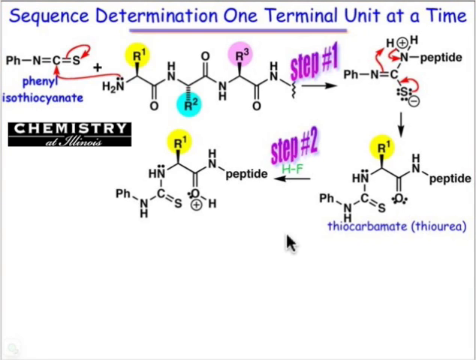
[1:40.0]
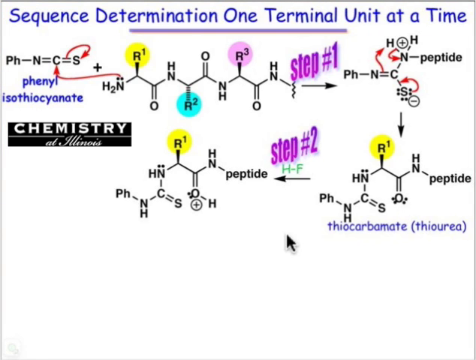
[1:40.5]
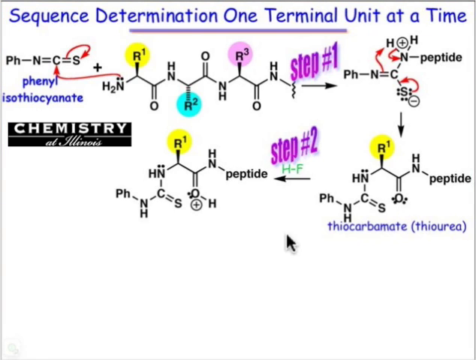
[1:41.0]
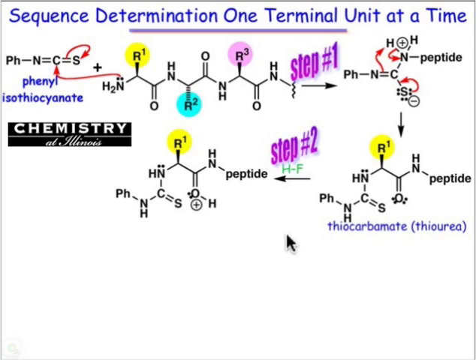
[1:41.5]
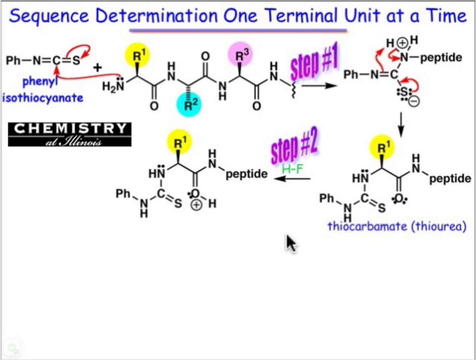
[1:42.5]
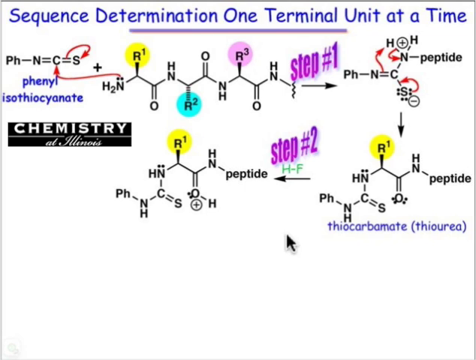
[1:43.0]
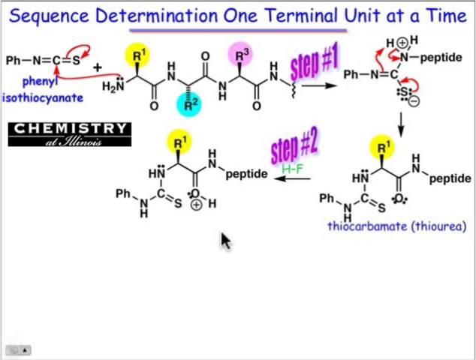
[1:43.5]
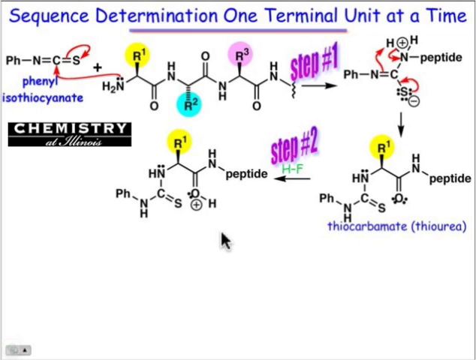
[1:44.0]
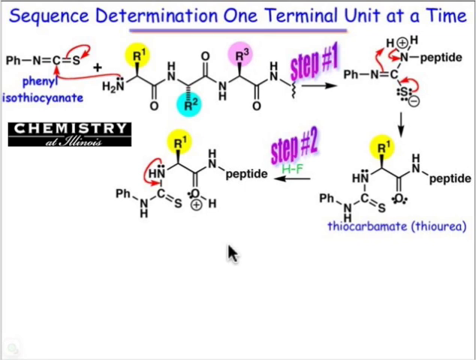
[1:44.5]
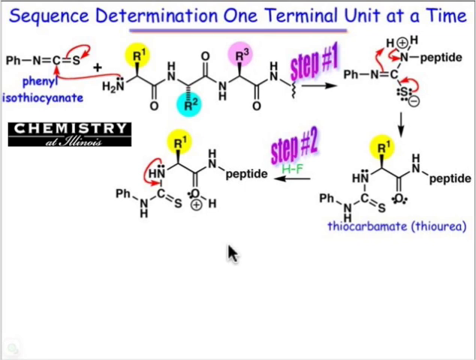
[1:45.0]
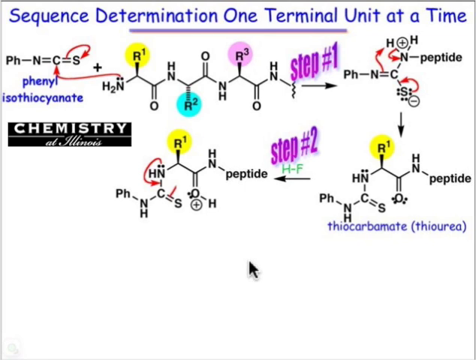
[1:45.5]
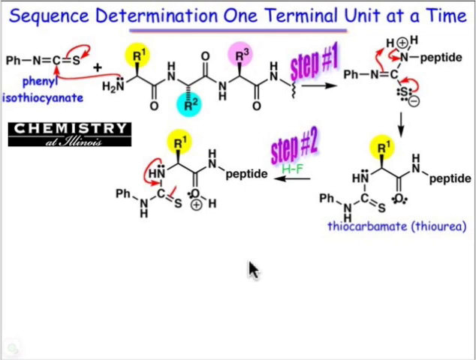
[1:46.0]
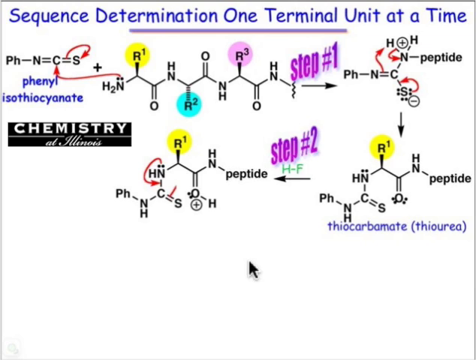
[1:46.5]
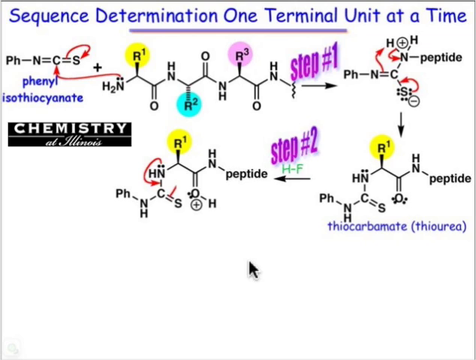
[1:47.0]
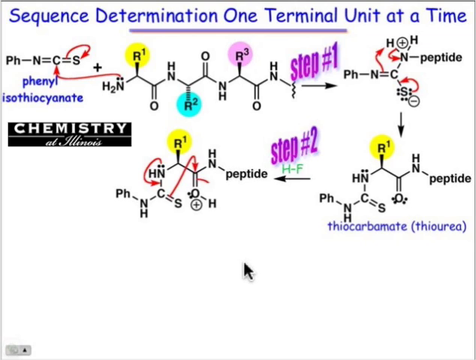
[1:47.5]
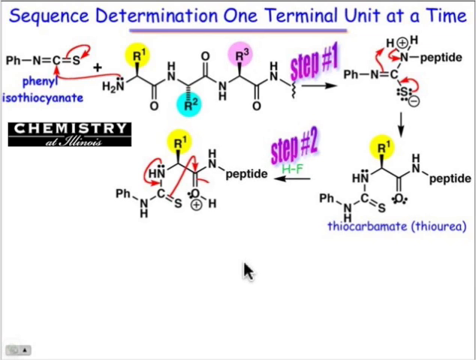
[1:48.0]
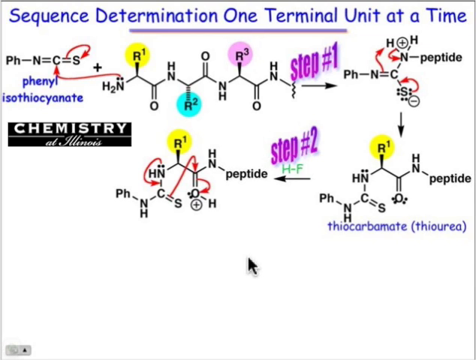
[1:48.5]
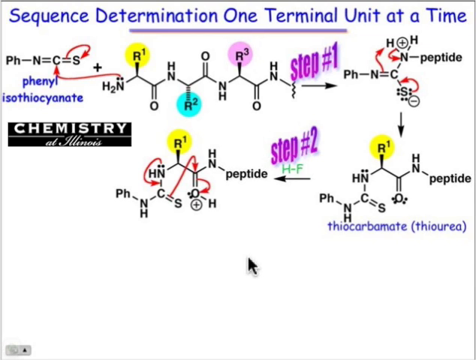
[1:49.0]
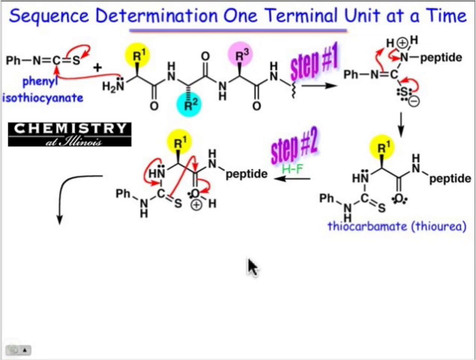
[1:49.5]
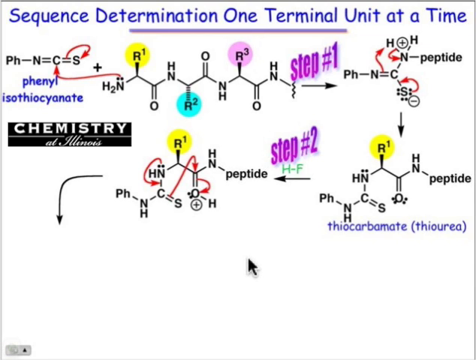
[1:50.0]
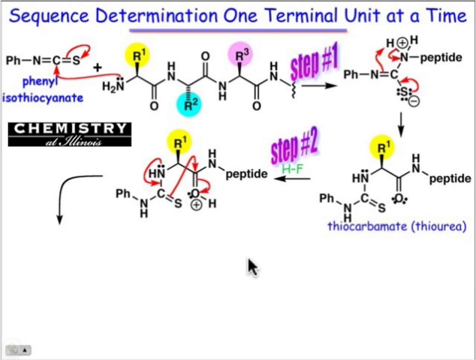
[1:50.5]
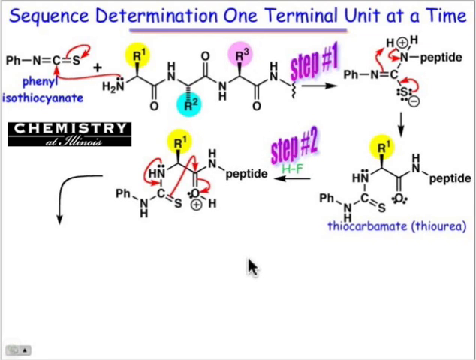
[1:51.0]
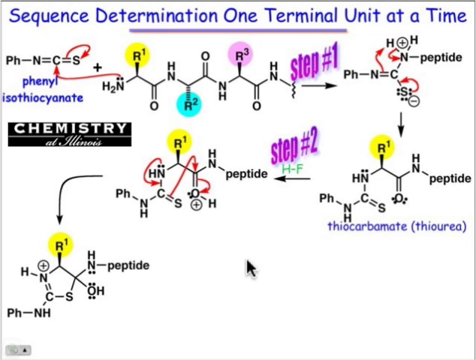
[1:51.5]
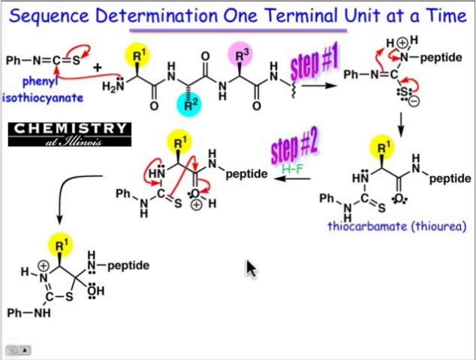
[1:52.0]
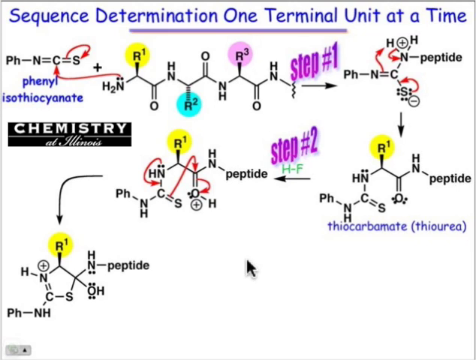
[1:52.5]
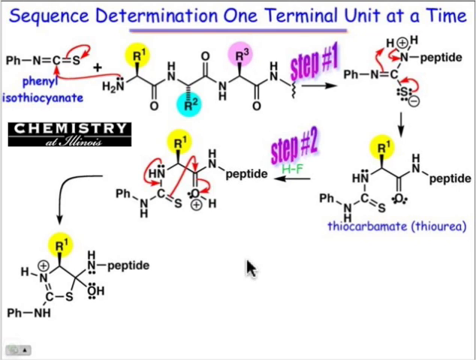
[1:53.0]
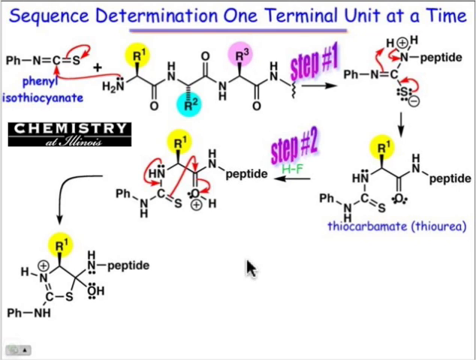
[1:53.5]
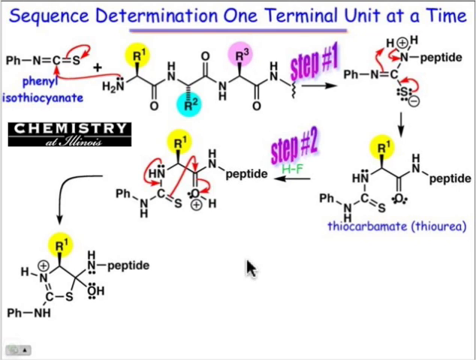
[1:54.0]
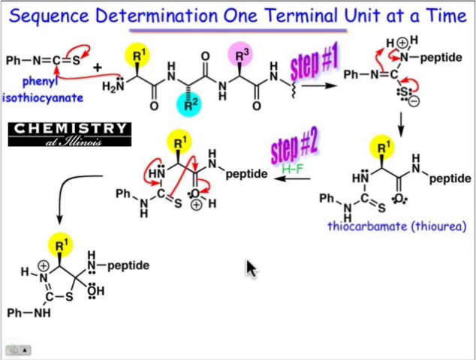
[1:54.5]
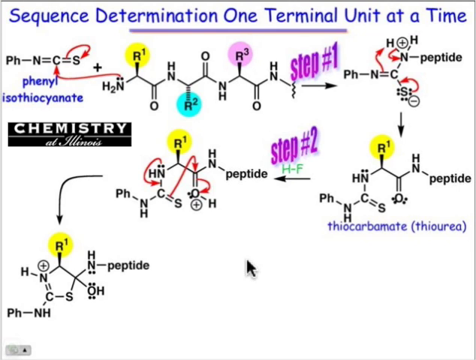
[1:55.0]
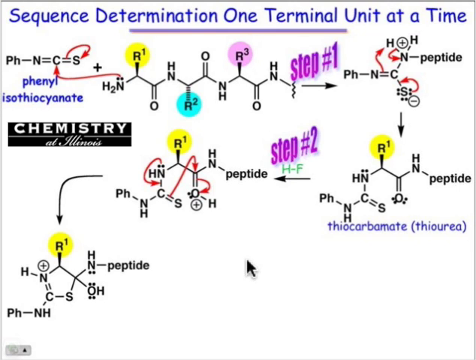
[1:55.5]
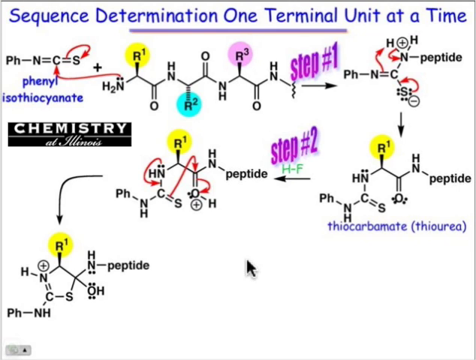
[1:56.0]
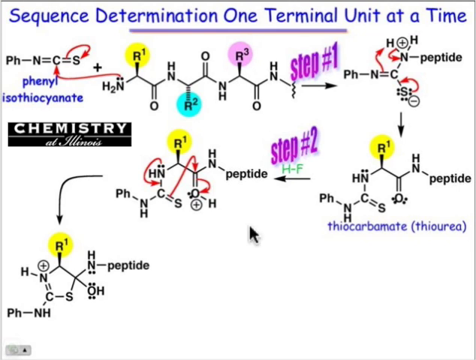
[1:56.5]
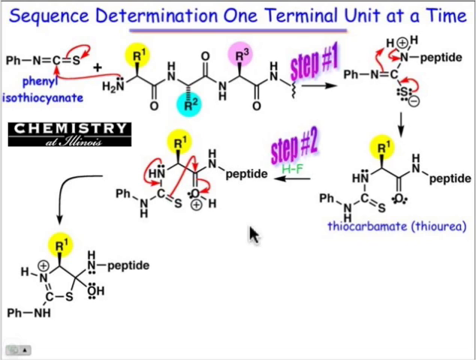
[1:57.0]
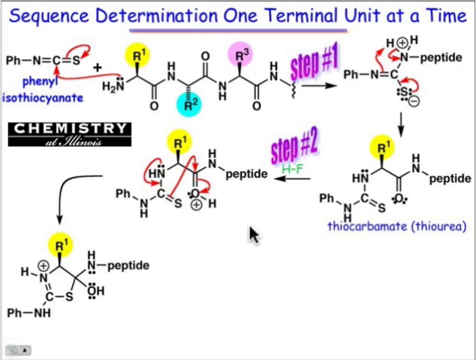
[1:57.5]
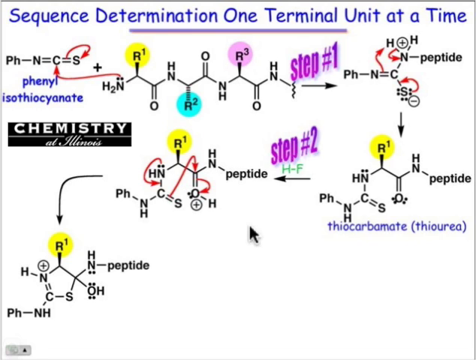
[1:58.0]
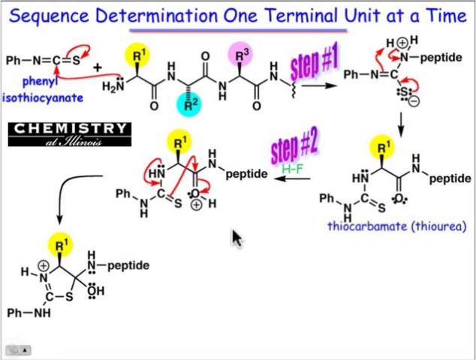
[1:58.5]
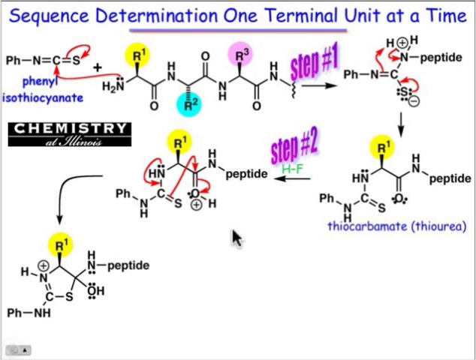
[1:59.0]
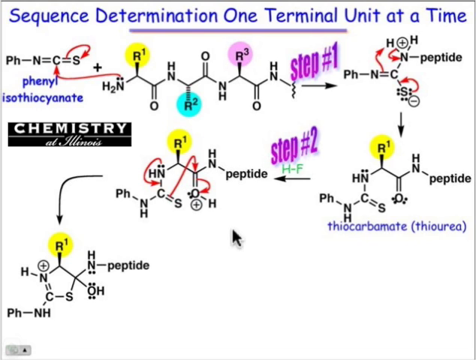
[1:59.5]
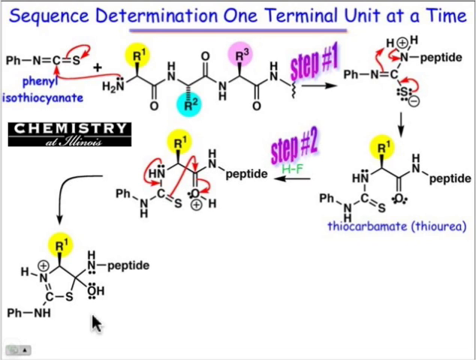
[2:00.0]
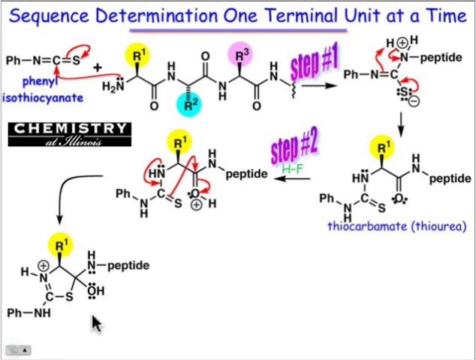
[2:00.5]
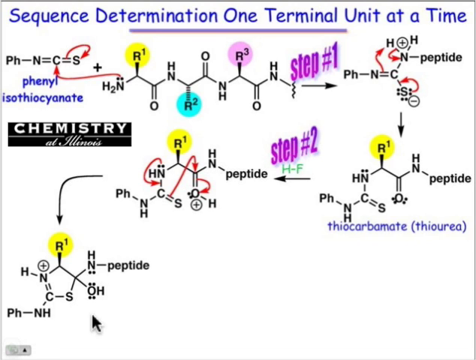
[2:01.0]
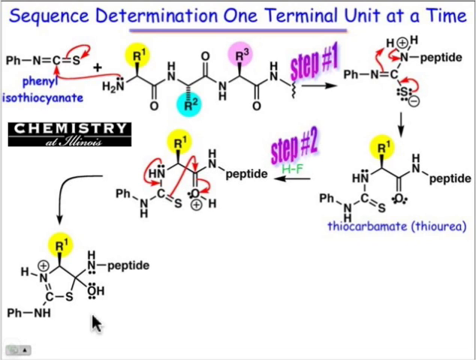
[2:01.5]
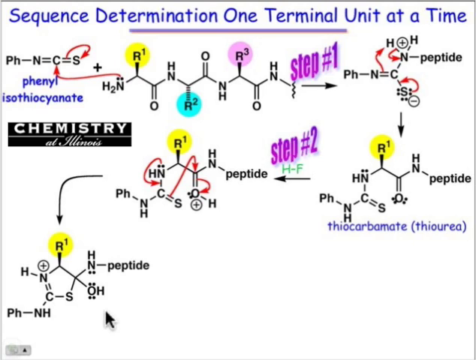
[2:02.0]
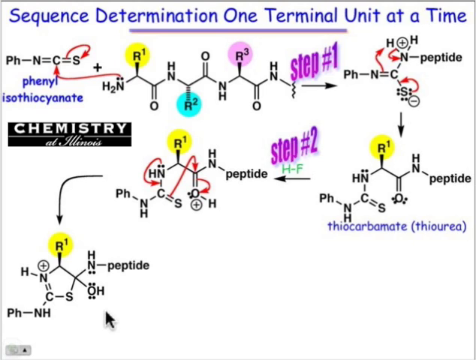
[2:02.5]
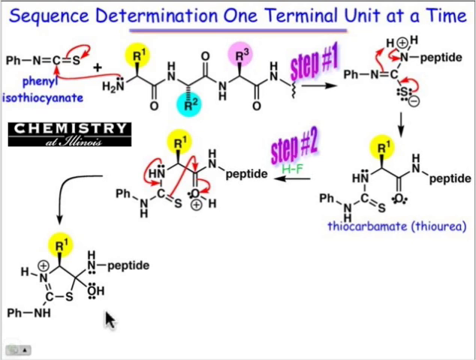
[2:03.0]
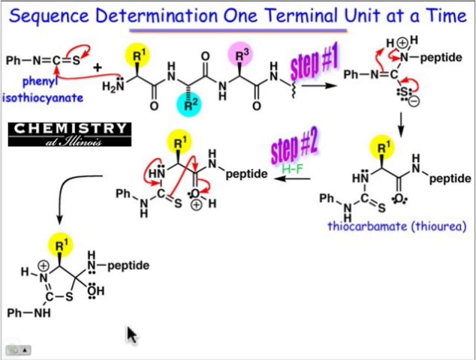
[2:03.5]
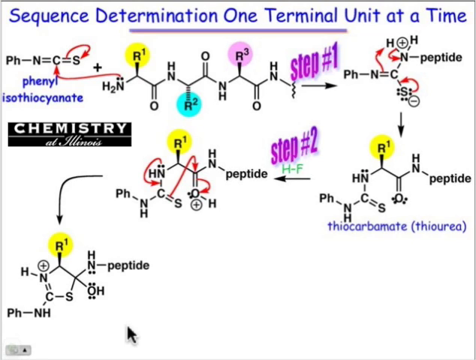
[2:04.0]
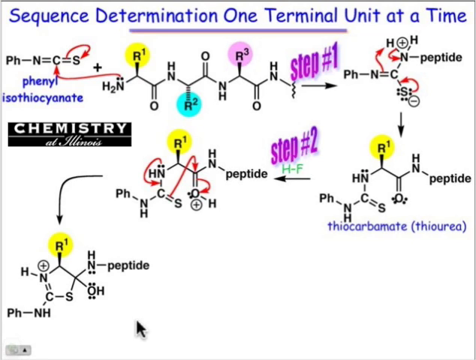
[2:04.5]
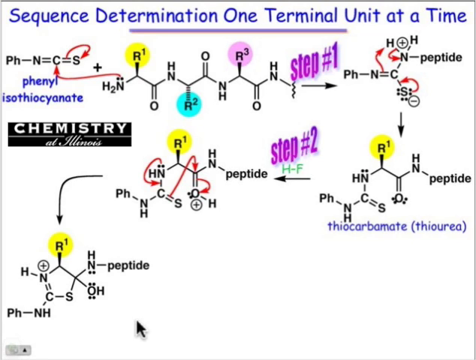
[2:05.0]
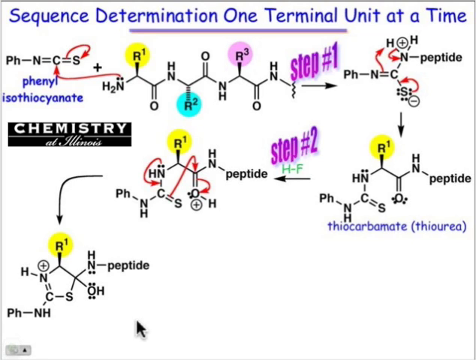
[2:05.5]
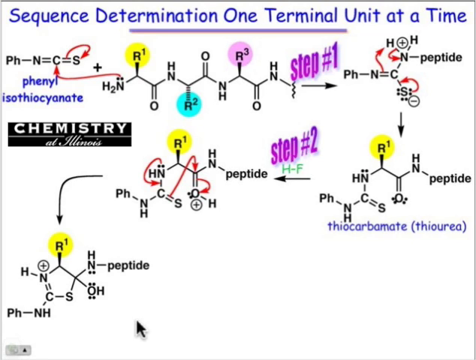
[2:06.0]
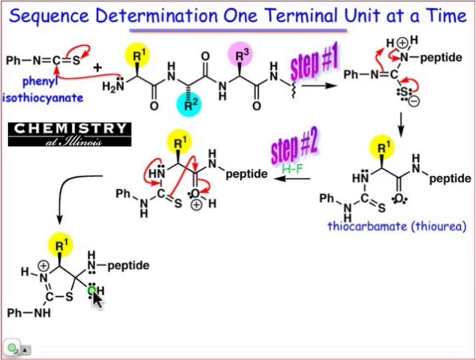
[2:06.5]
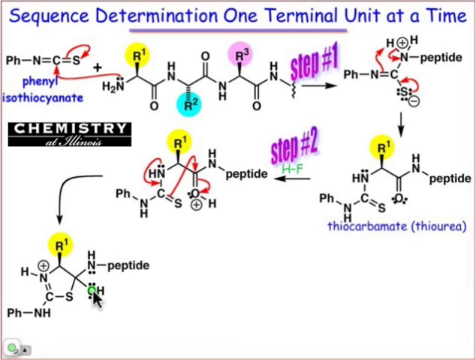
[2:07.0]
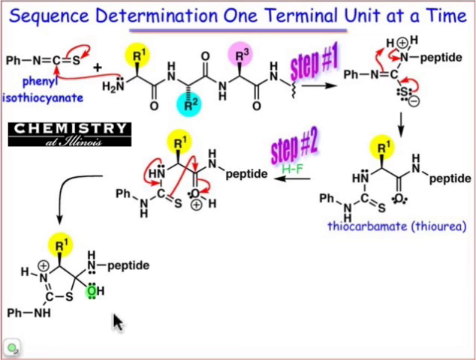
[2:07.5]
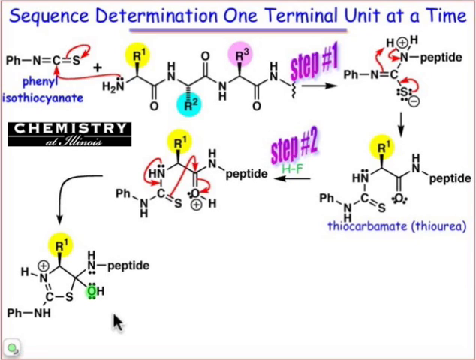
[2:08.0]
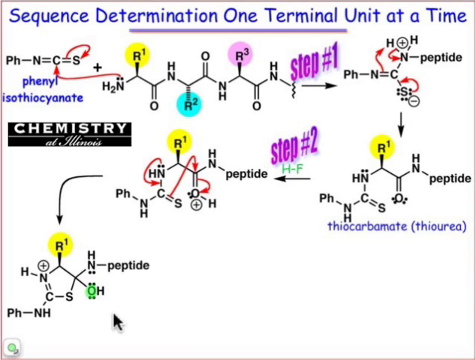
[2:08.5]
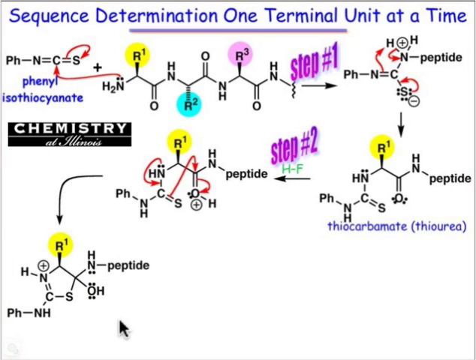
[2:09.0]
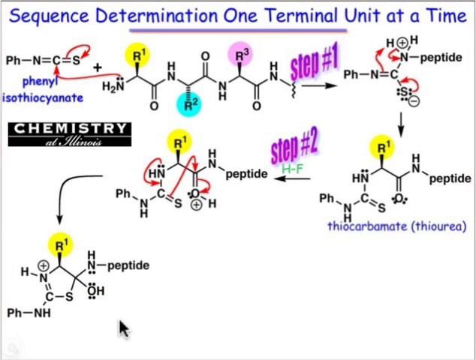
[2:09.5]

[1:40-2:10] A background with texts in varying colors shows a shared screen from a professor's computer. At the top, in cobalt blue, it says "sequence determination, one terminal unit at a time." Directly beneath that, at the center top, a purple line runs from left to right. Directly beneath that to the left is black text that says "pH-n=C=S," followed by a plus sign. Then a chain of a phenol isothiocyanate begins with H2N, goes up to R1 inside a yellow circle, down to O, up to HN, down to R2 inside a blue circle, up to O, down to NH, up to R3 inside a pink circle, down to O, up to HN, then down to a squiggly symbol topped with purple text that says "step number one." Directly beneath that is a directional arrow pointing to the right, followed by black text that says "pH-N=C," which dots up to an N and then an H, plus H, followed by "minus peptide." Beneath that to the left is more blue text that says "phenol isothiocyanate," and beneath that is a black rectangle on the left with white text that says "chemistry at Illinois."